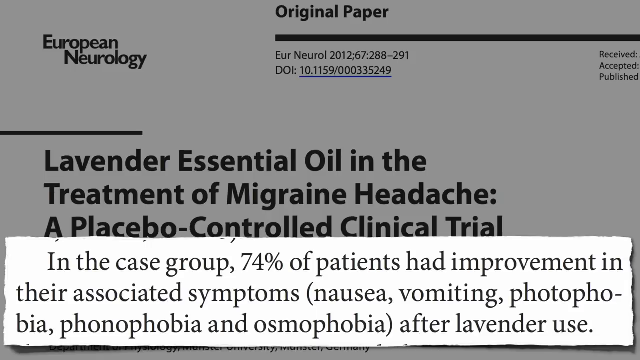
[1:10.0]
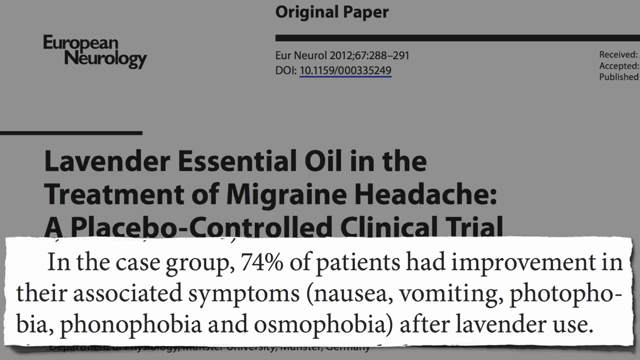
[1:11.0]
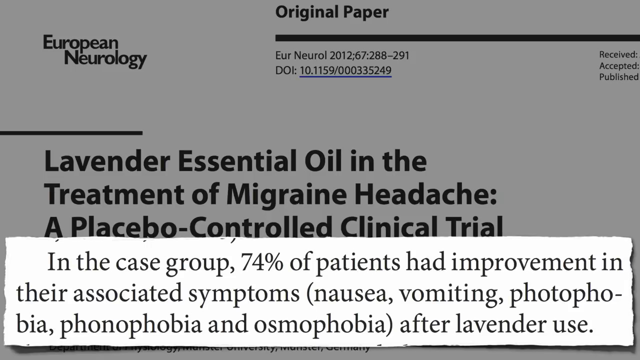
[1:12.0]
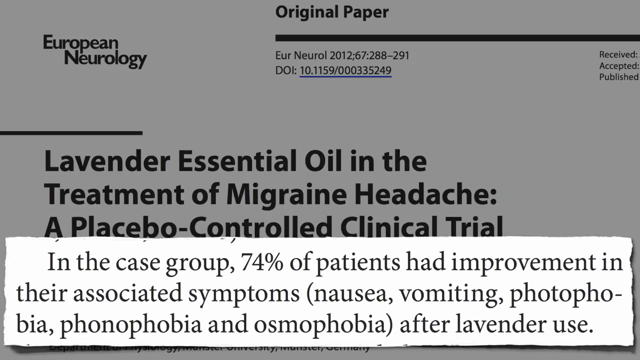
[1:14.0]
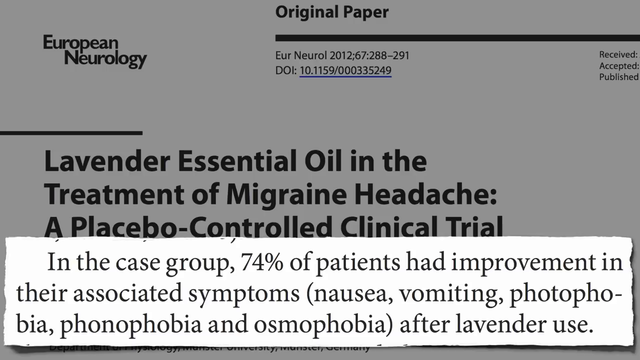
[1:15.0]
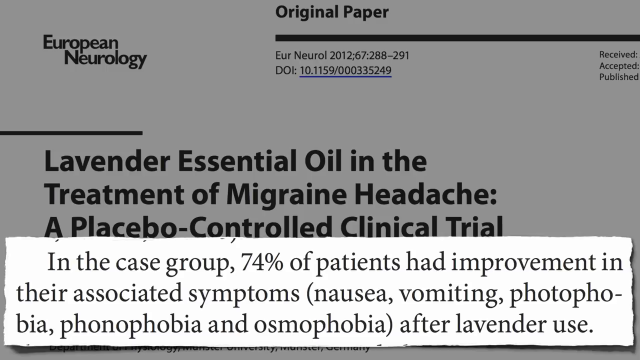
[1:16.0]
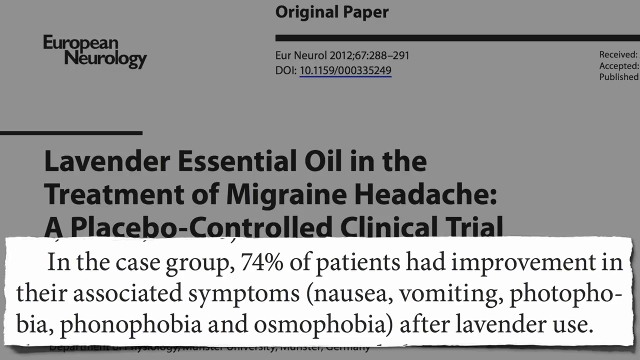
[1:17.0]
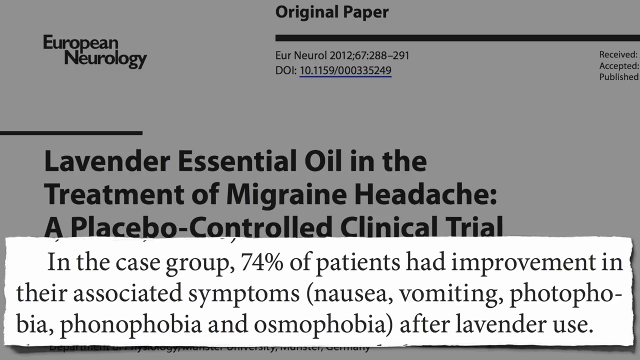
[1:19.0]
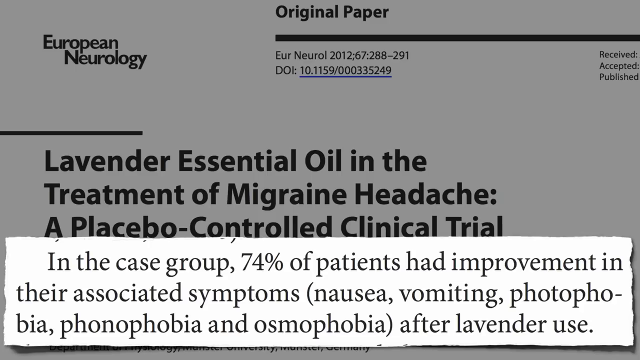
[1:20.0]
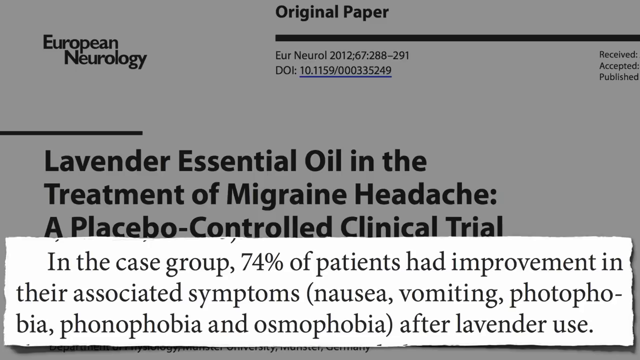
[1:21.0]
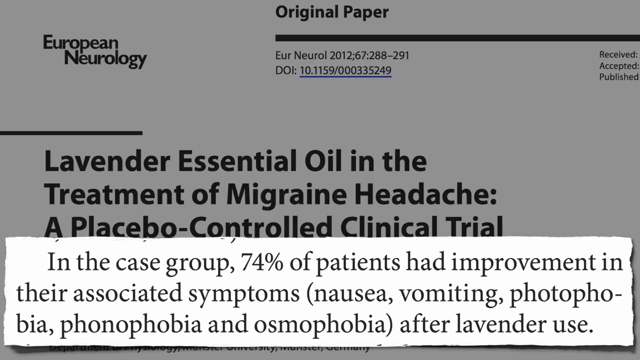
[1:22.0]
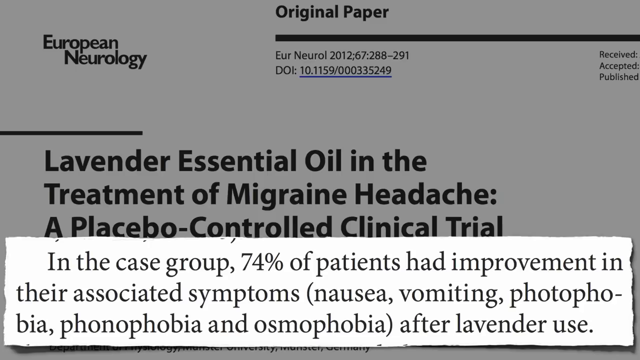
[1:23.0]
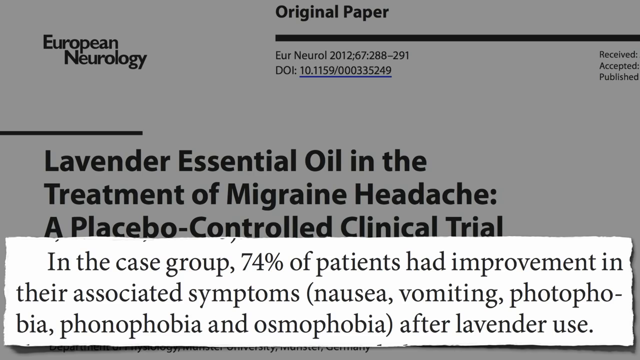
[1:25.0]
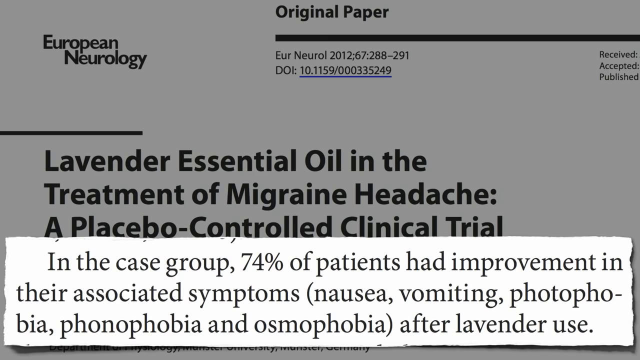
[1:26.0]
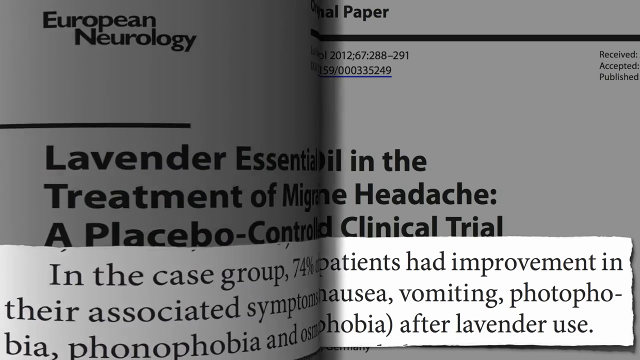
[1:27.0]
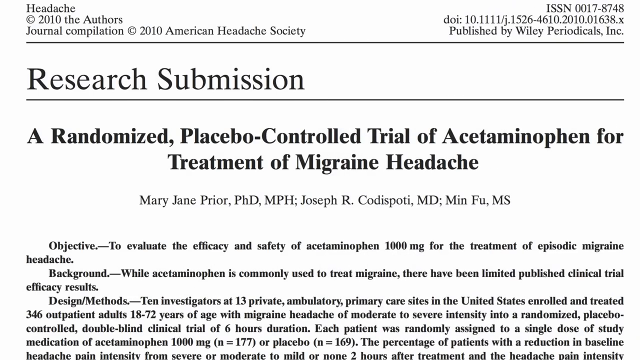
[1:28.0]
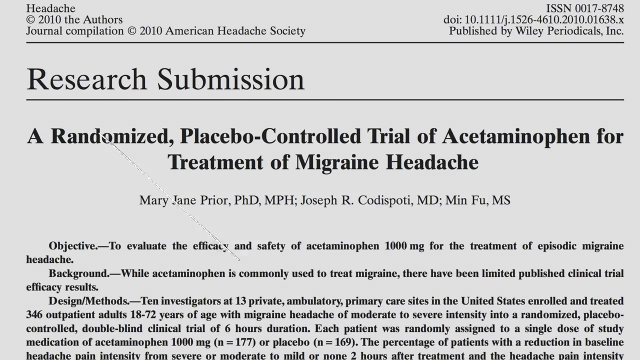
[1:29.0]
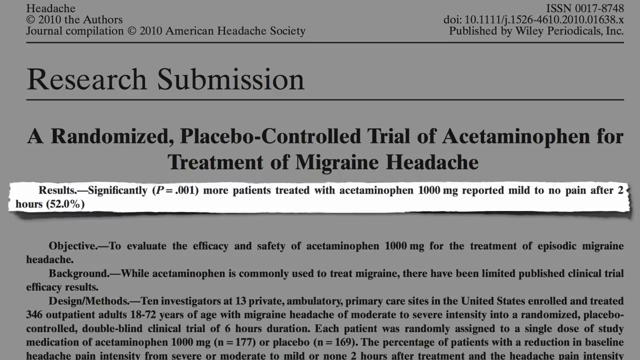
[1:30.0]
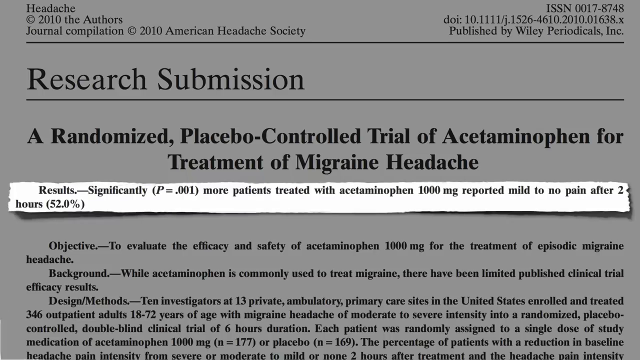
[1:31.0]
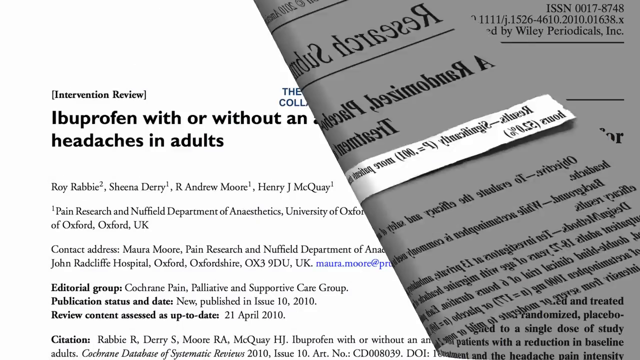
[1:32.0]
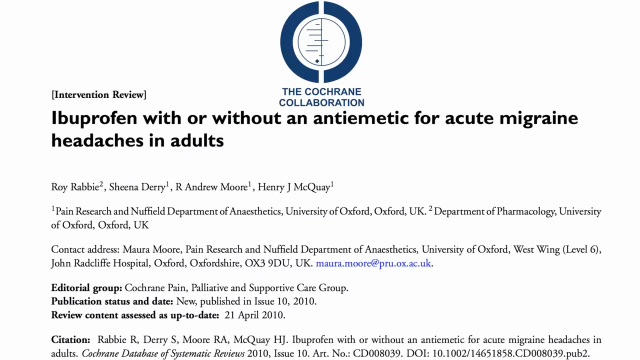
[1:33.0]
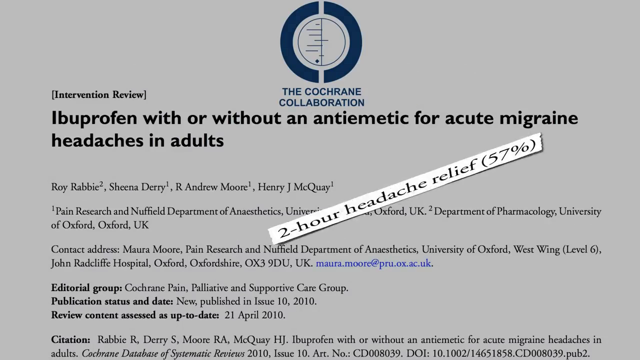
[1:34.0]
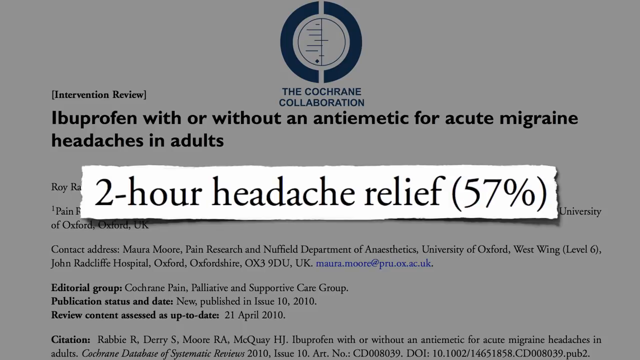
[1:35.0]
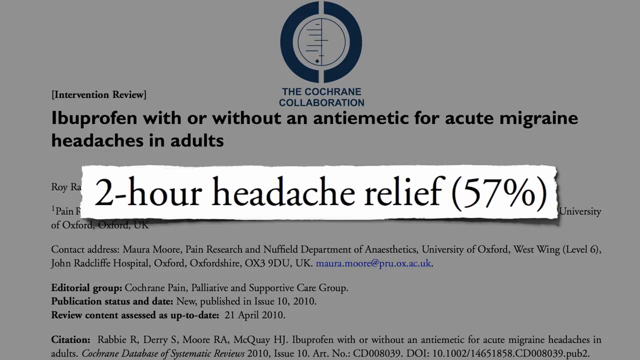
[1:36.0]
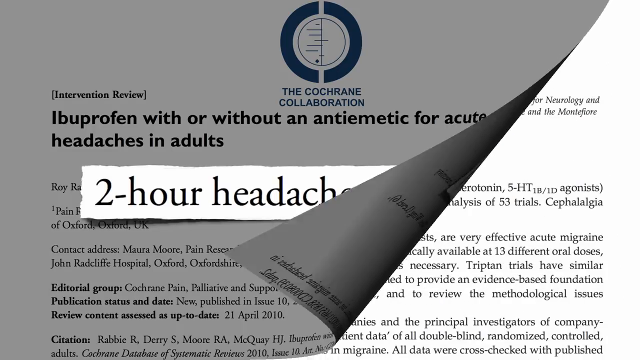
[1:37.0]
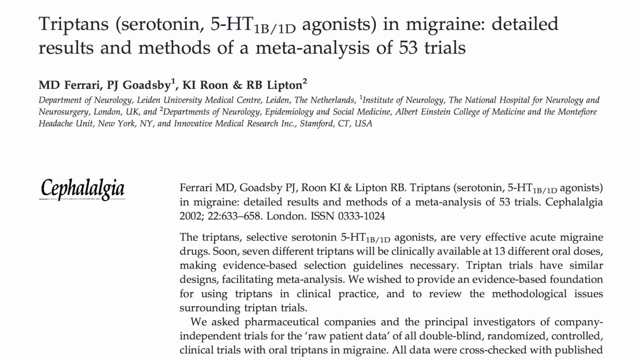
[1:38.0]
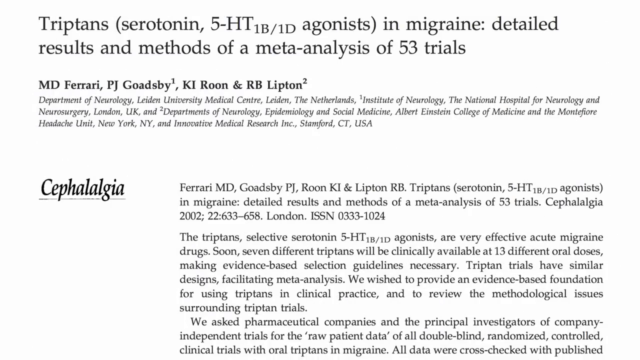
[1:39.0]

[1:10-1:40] The results of the study appear: in the case group, 74% of patients had an improvement of their associated migraine symptoms after using lavender, with the listed symptoms including nausea and vomiting. To move to the next screen, a page turns as if the journal were a paper journal, but it turns backwards, opposite to the normal reading direction. This reveals another research paper marked "Research Submission", with the header "A Randomized Placebo-Controlled Trial of Acetaminophen for Treatment of Migraine Headache", by Mary Jane Pryor, Joseph R. Cordisproti, and Min Fu. The results pop up on the screen highlighted, with the rest of the article greyed out: significantly more patients treated with acetaminophen 1000mg reported mild to no pain after 2 hours, 52% of the sample. Another page peels away to an article titled "ibuprofen with or without an anti-emetic for acute migraine headaches in adults", and its highlighted result pops up in the centre of the screen reading "two hour headache relief 57%".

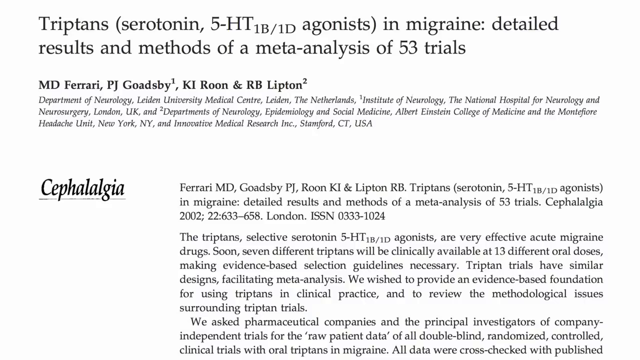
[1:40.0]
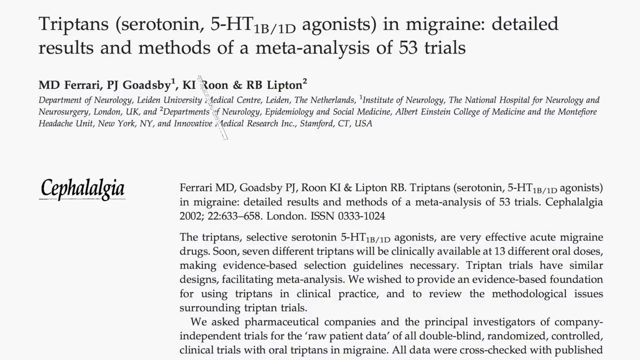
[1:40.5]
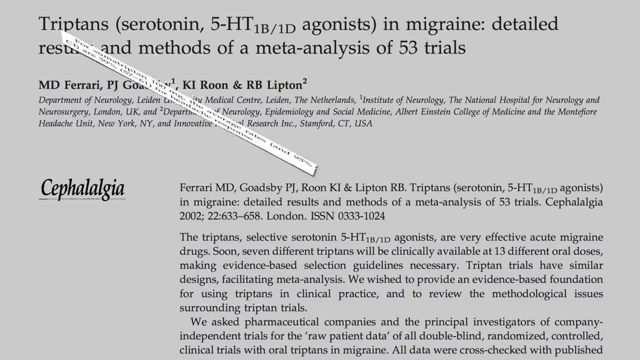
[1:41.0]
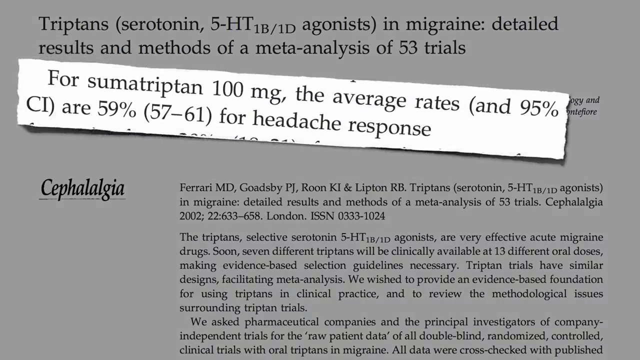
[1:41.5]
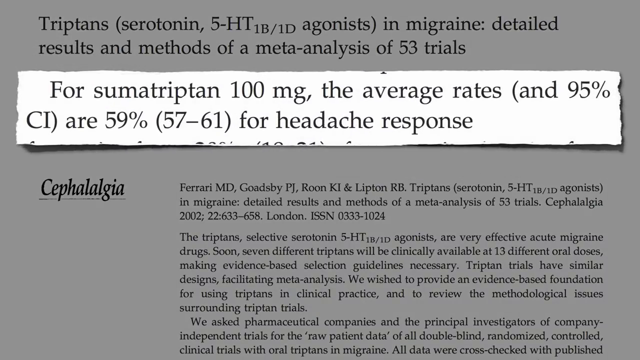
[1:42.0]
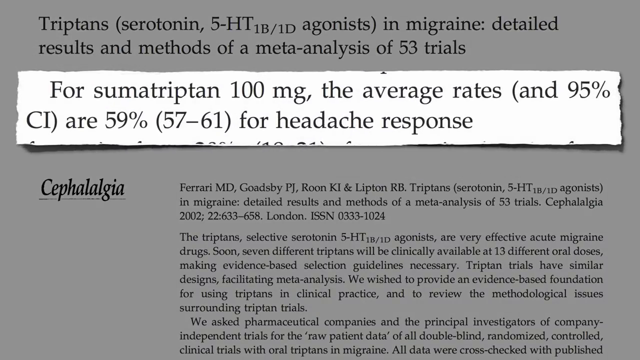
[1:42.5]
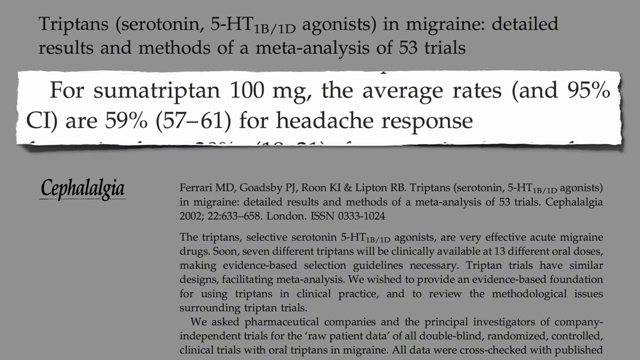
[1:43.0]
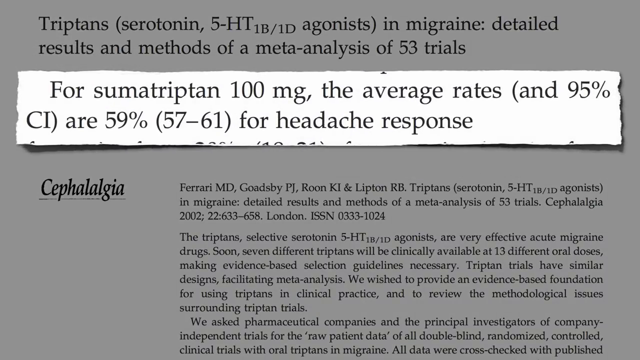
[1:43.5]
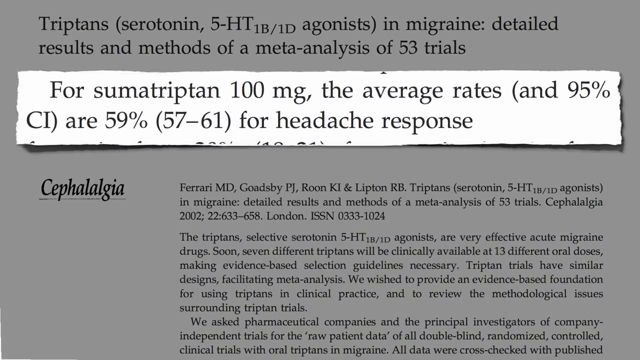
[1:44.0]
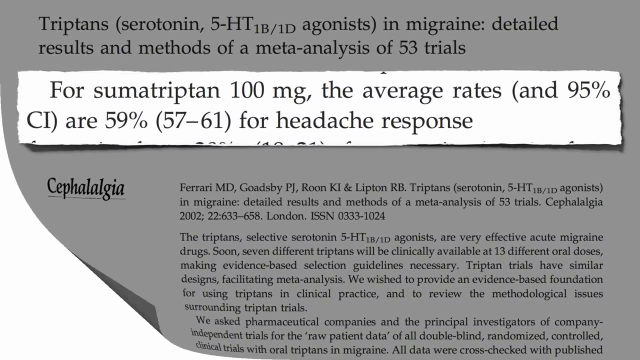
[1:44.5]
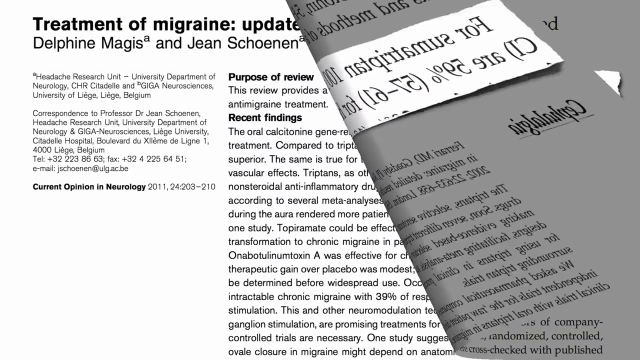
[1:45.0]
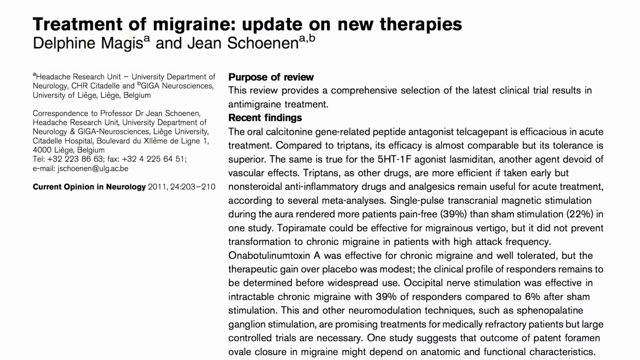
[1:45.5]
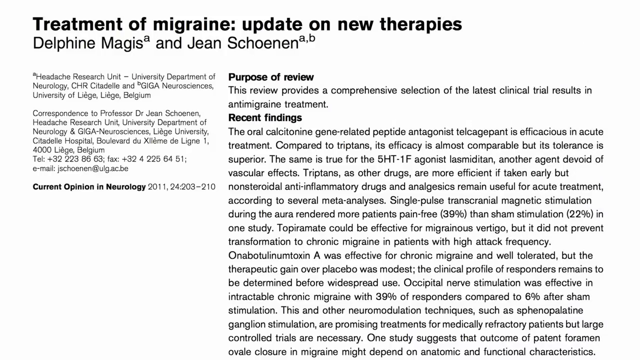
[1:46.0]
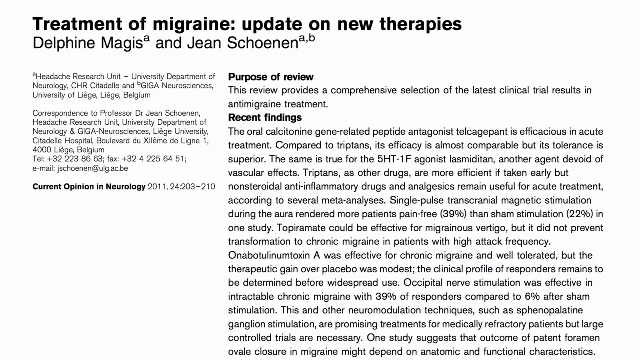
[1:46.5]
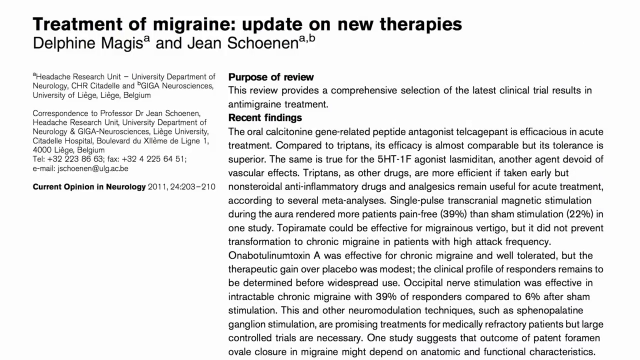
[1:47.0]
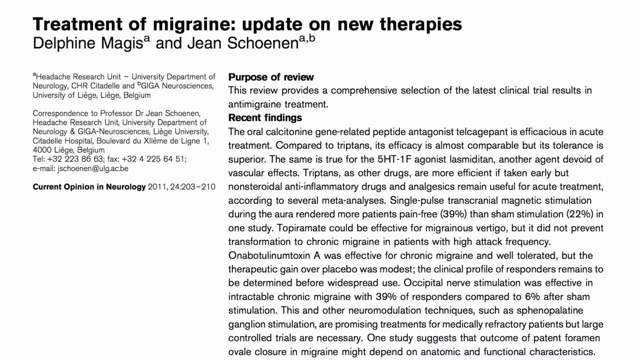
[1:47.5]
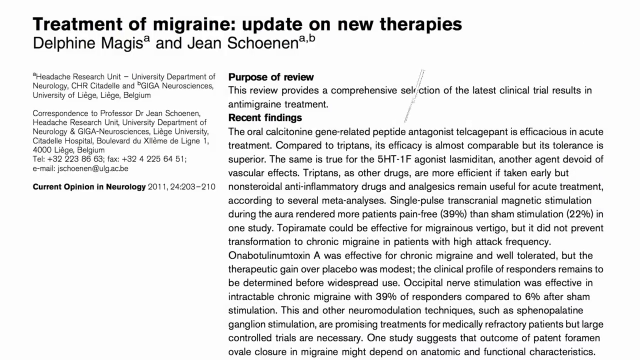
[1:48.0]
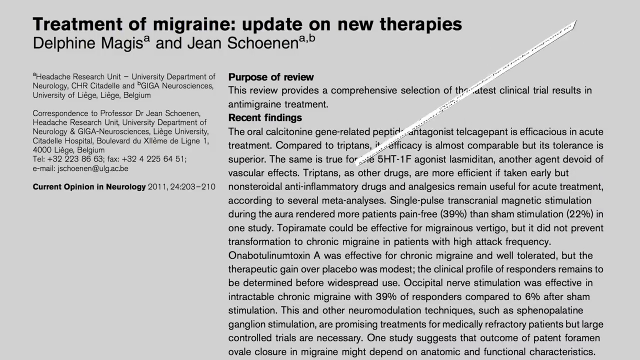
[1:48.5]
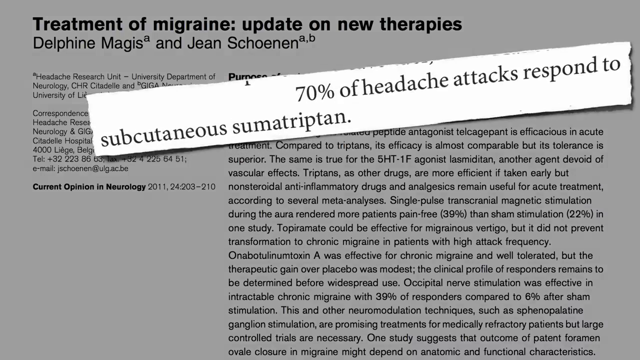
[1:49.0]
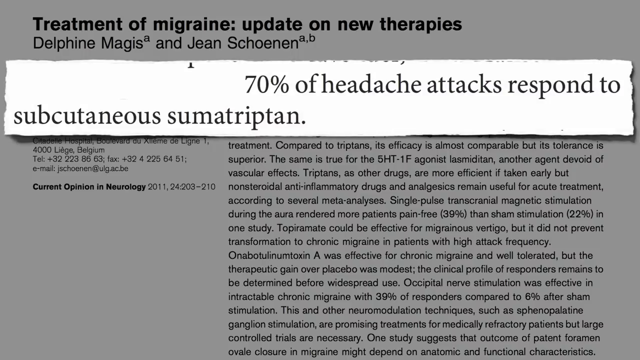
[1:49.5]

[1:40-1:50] The next article appears to be about triptans in migraine, covering the results and the method. A highlighted section pops up in the centre of the screen reading that for sumatriptan 100mg the average rate and 95% CI are 59% for headache response. The page peels away to another article titled "Treatment of Migraine Update on New Therapies", by Delphine Magis and Jean Shonanan. Its highlighted section pops up very quickly and then disappears quickly.